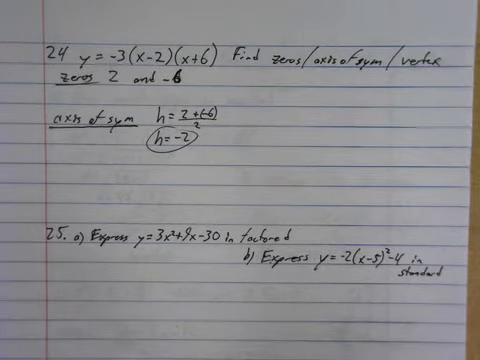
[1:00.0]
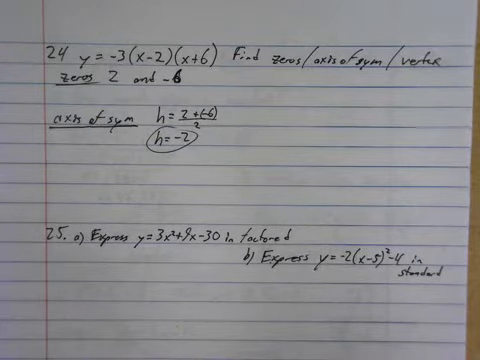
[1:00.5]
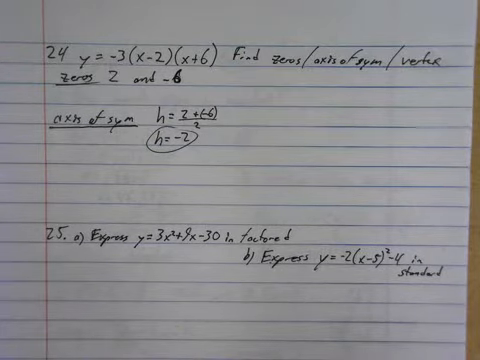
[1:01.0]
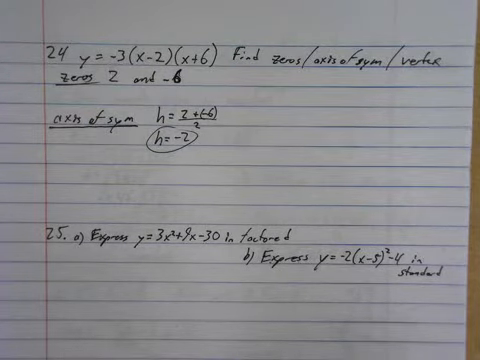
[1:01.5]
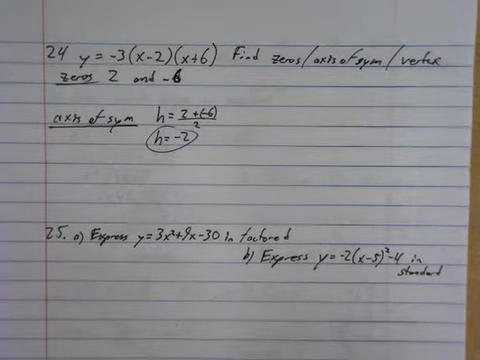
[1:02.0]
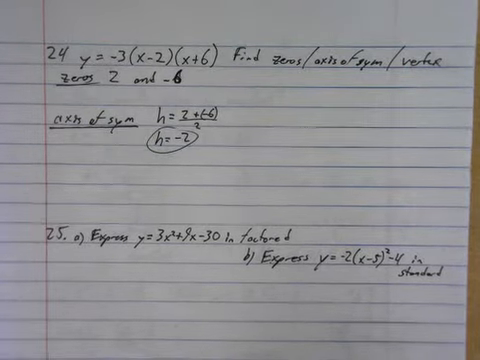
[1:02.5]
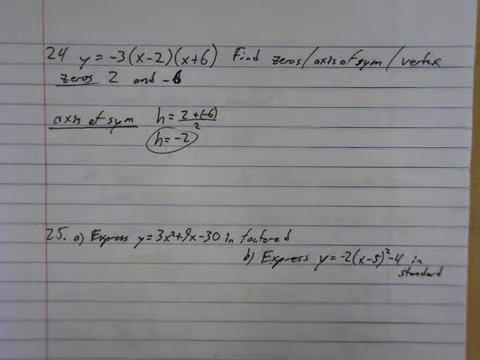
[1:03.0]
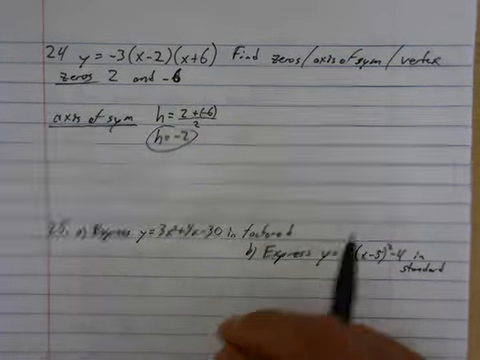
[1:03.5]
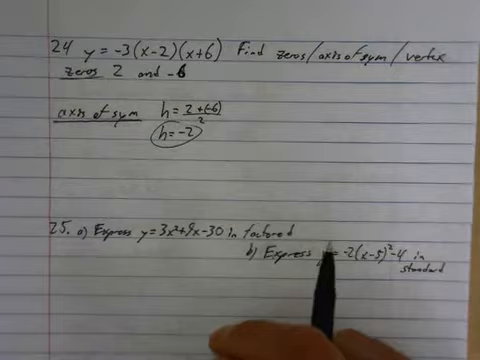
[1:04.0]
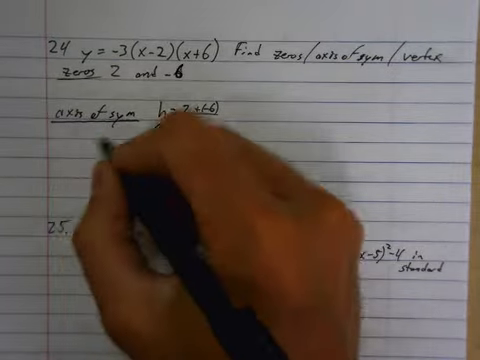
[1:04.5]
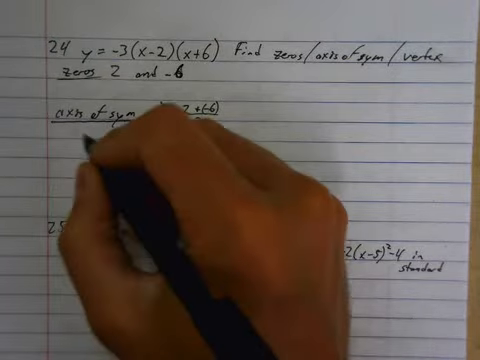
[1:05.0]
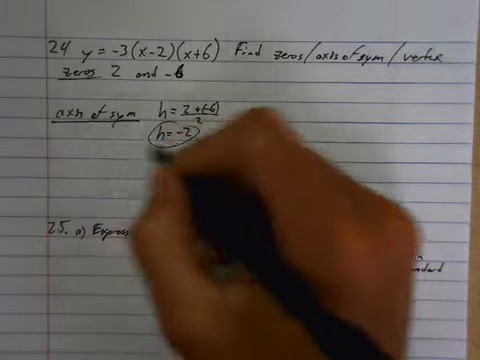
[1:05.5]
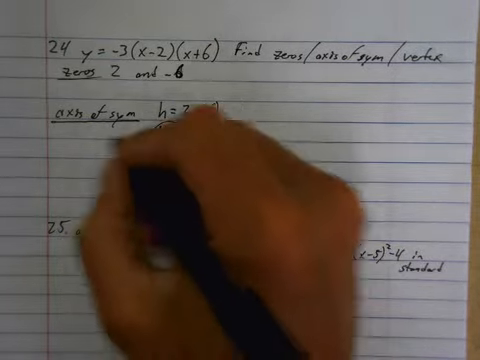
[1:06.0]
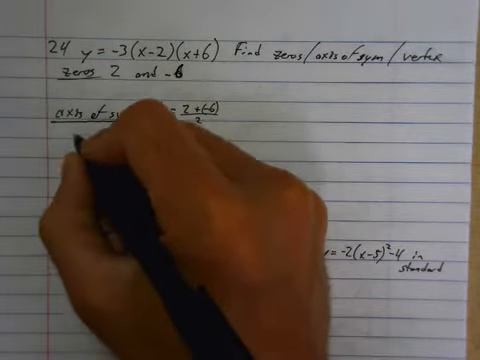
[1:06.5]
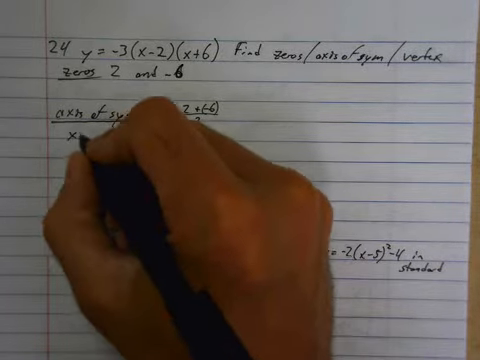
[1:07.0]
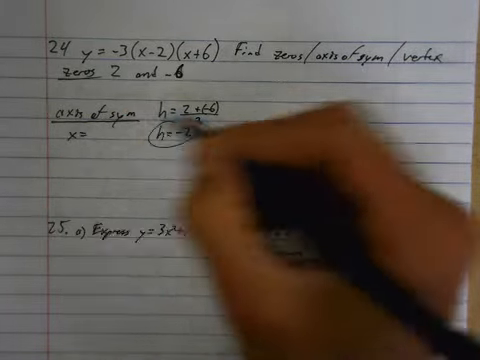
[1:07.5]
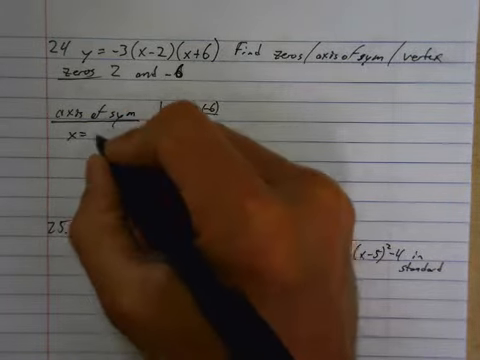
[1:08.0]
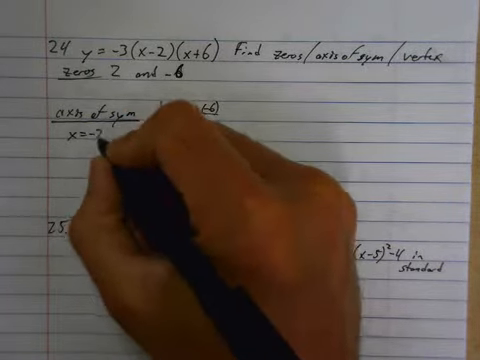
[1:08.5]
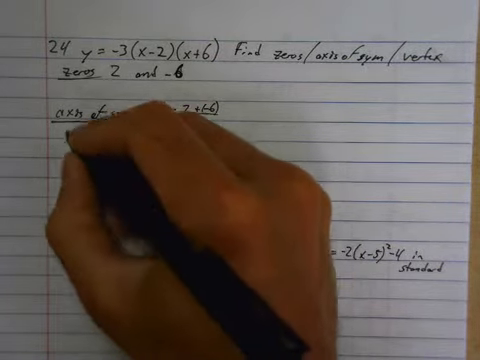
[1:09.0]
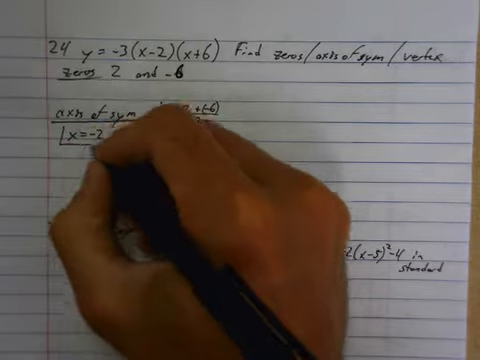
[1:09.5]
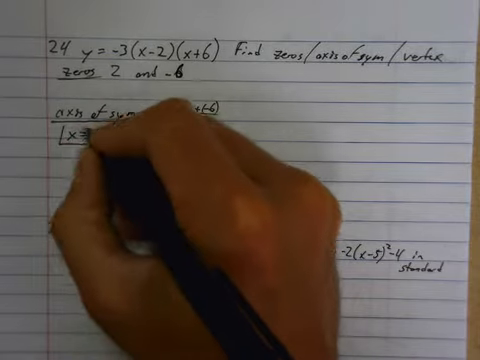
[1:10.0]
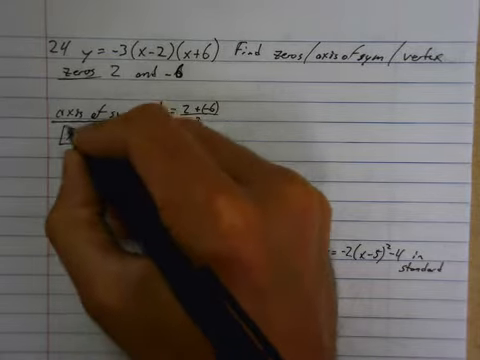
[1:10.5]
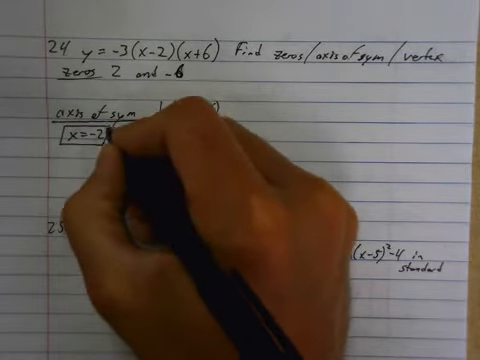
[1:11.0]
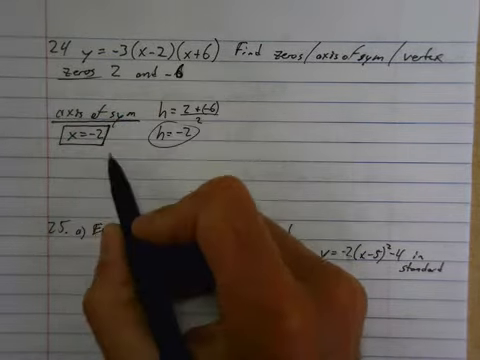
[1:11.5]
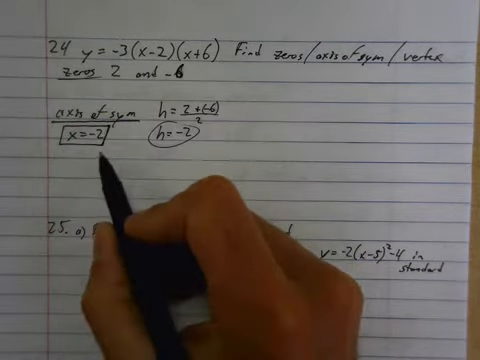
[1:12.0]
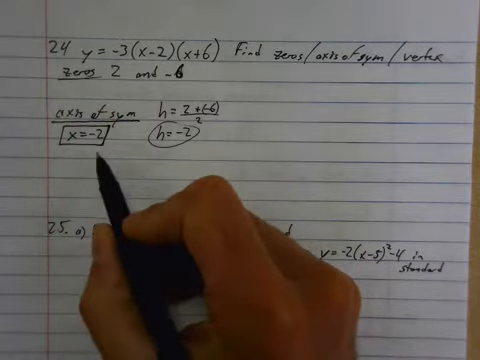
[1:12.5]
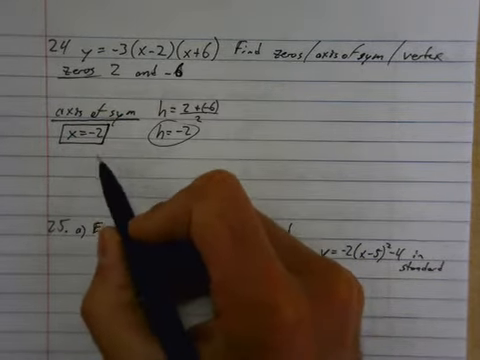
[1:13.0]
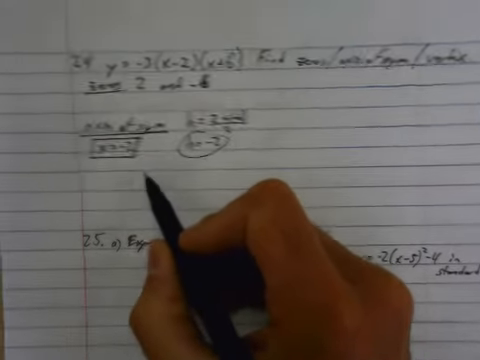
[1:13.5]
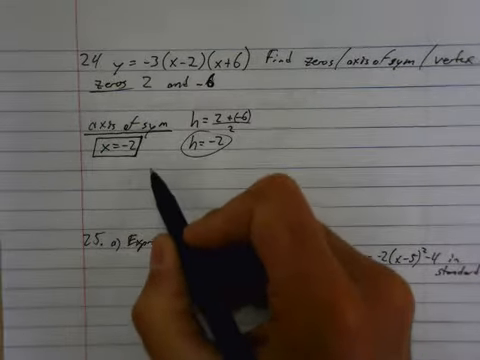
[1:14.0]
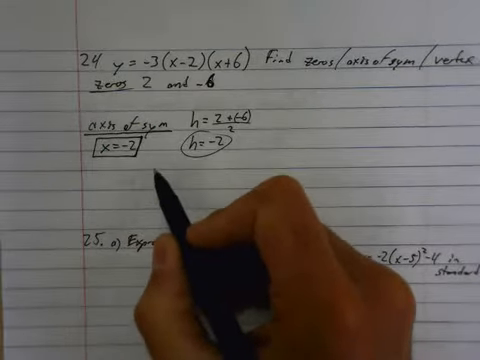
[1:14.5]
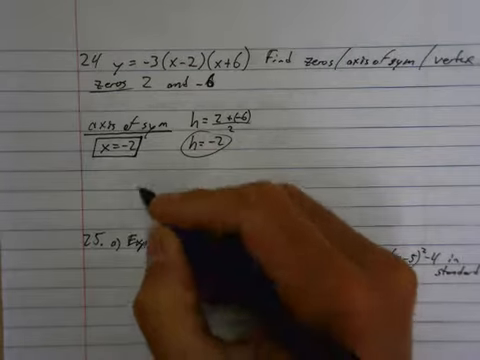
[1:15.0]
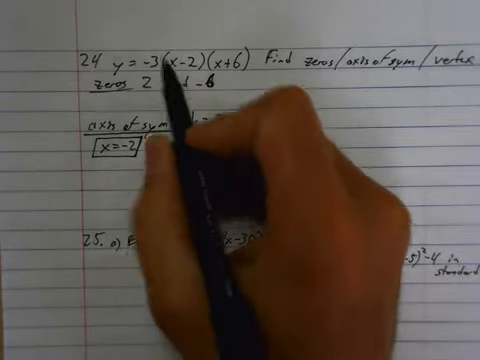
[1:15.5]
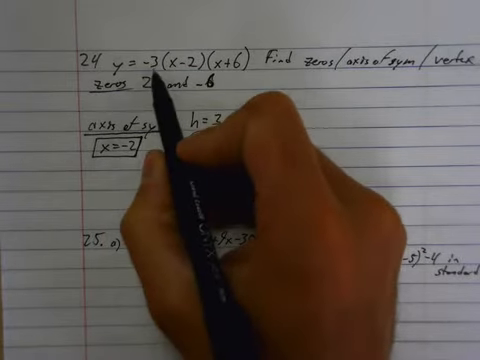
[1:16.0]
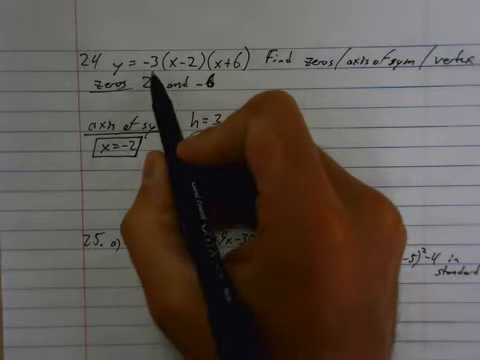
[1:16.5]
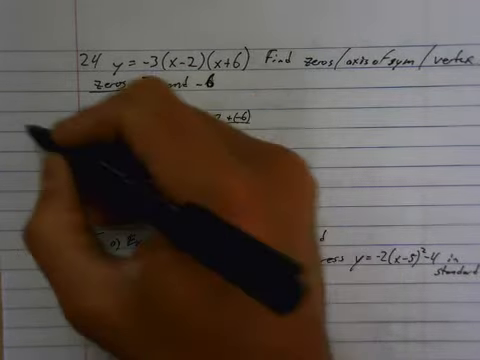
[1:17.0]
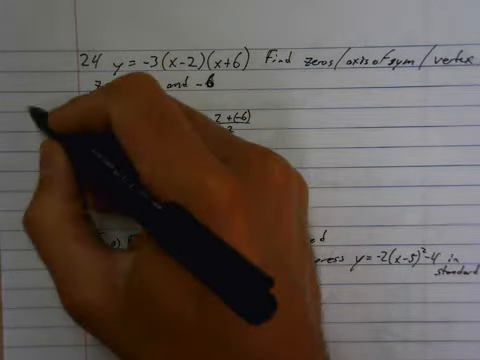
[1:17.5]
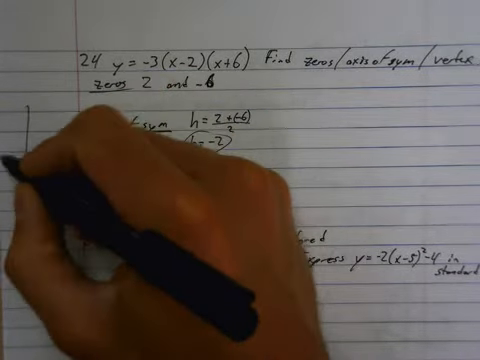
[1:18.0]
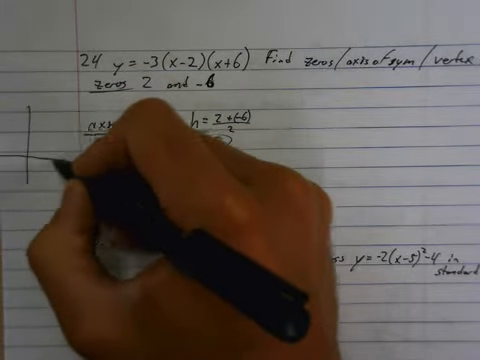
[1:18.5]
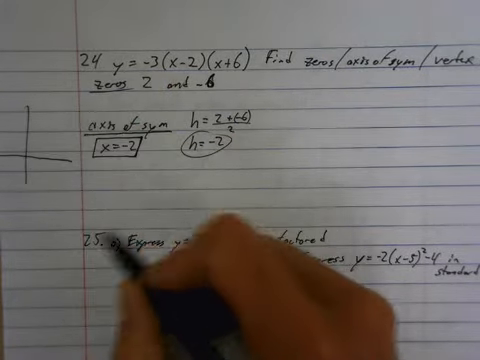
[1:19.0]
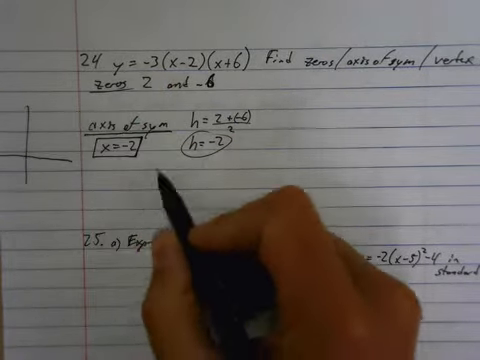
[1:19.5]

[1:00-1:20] The person continues writing on the binder paper on the desk, holding a black pen in their right hand. They are writing equations and working through them, which looks to be mathematical. On the fourth line of the sheet is "axis of symmetry" with "h = 2 + (-6)", a line under it, the number 2 below, and then "h = -2", which is circled. To the left of that is "x = -2" with a square drawn around it. They point at the top line reading "24 y = -3(x - 2)(x + 6)", then move to the left side of the paper, draw a vertical line, and draw a horizontal line across near the bottom of it as they keep writing.